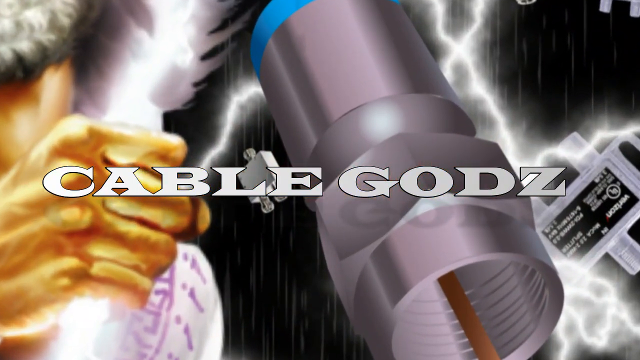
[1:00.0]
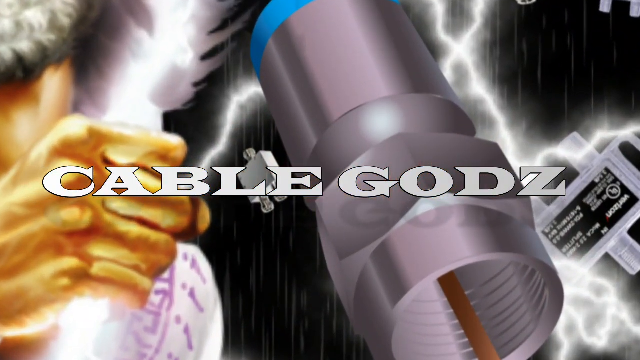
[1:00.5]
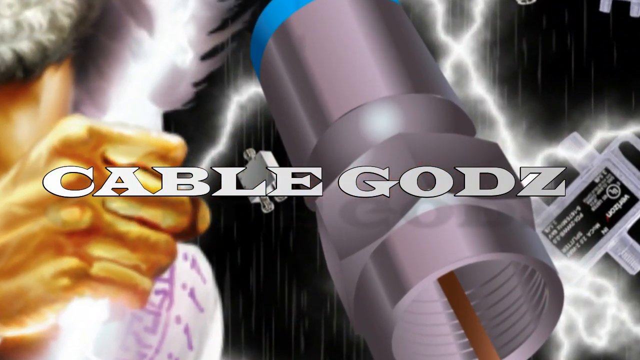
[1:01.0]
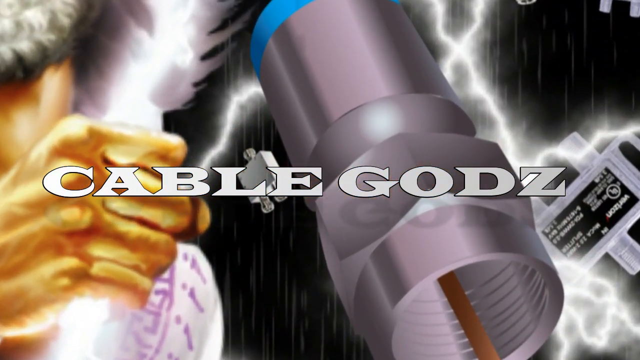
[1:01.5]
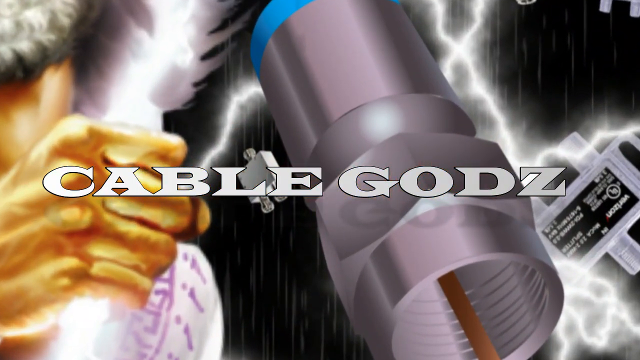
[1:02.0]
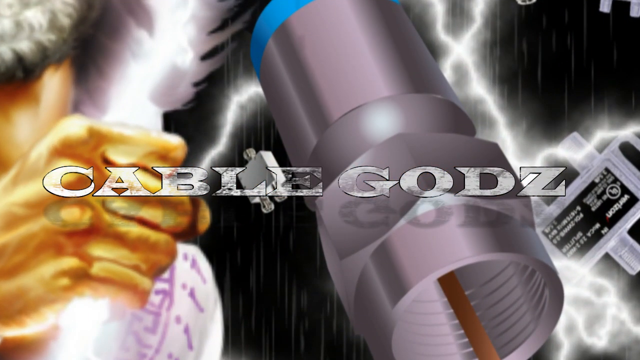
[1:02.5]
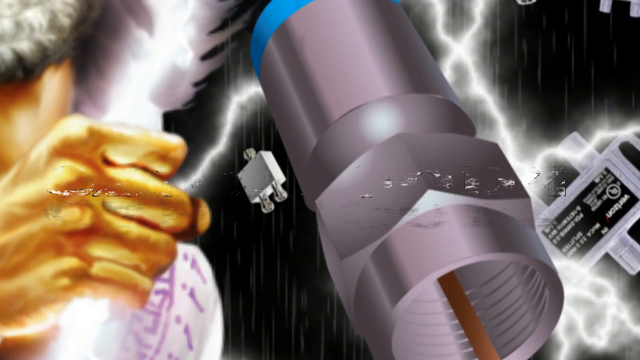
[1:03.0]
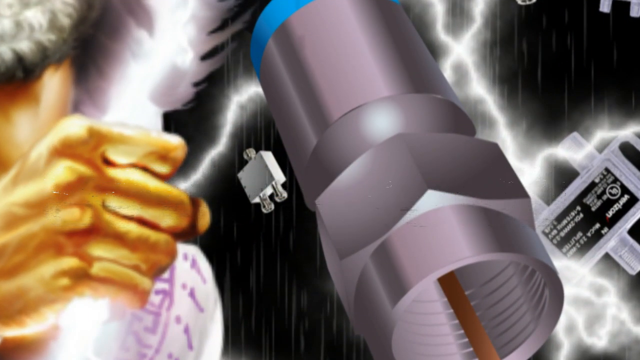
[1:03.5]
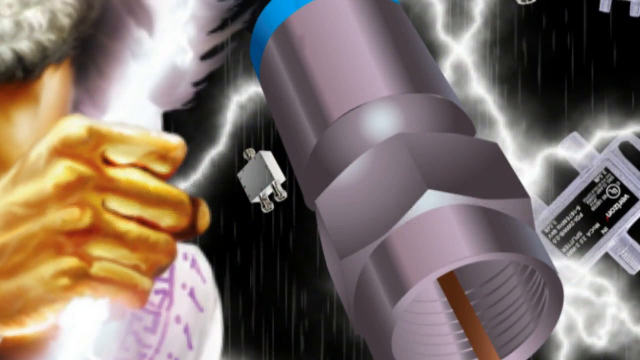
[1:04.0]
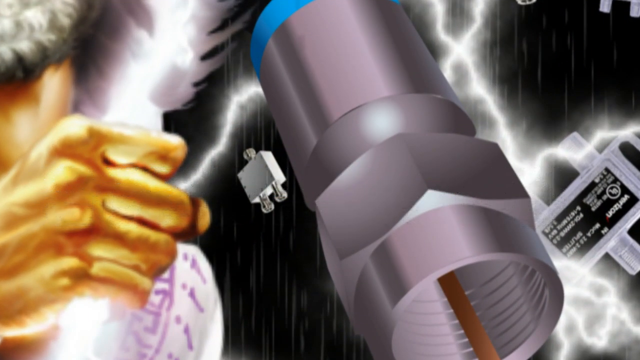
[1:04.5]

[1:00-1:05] A page says "cable gods" on a black background with a white raindrop-like effect. There are patches of lightning in the background, and a Caucasian man with a grey beard and white clothing is toward the edge of the screen. The "cable guards" writing in the center vanishes from the screen, revealing different connective devices. All the devices are silver with patches of black and white writing. The main pipe-like center icon has a blue lining toward one of its edges and looks like a bolt toward the opposite edge.